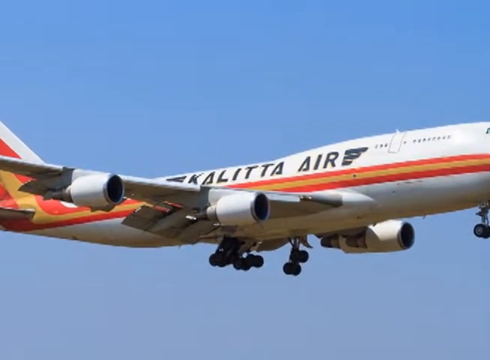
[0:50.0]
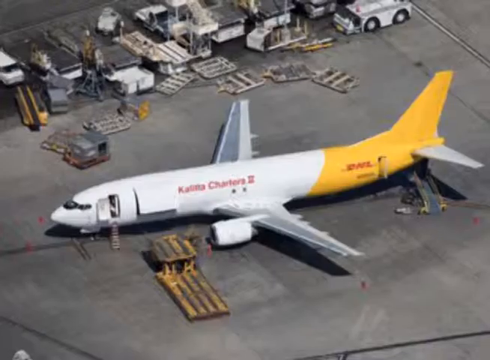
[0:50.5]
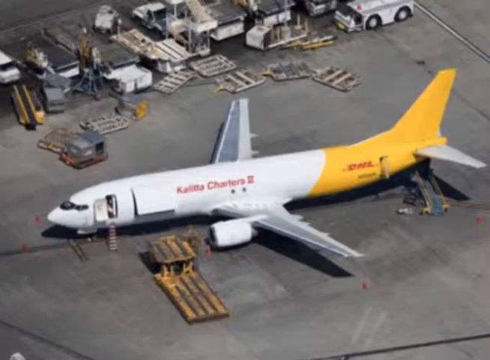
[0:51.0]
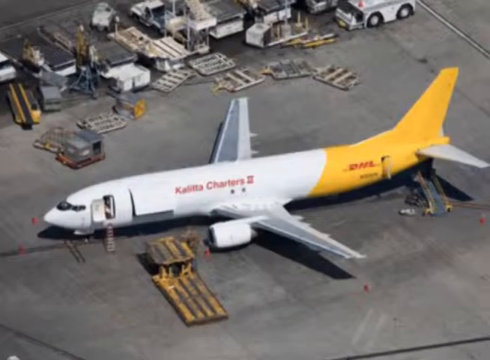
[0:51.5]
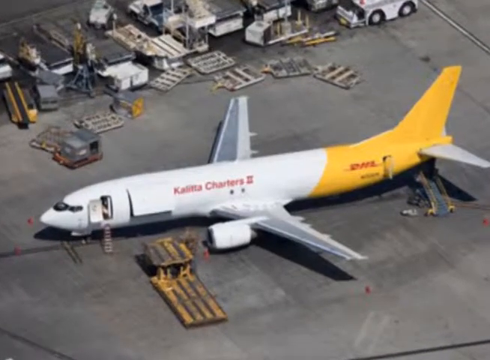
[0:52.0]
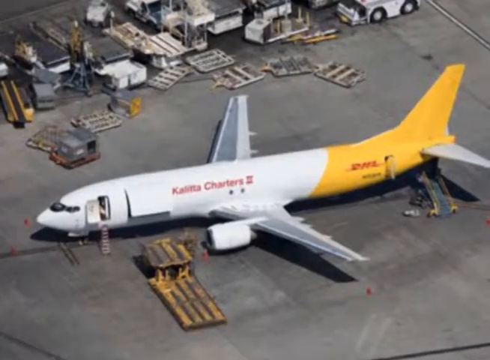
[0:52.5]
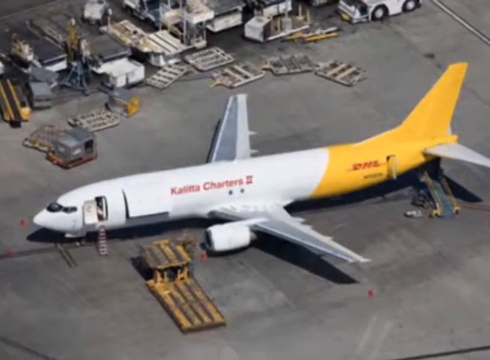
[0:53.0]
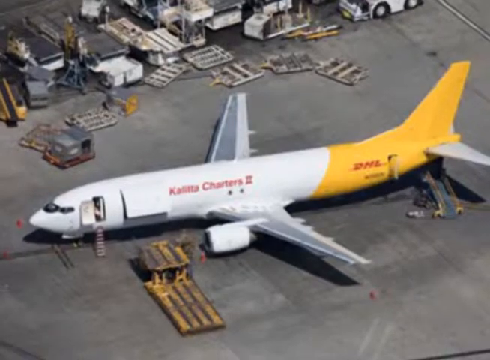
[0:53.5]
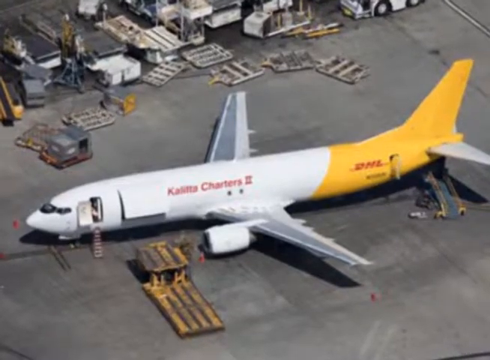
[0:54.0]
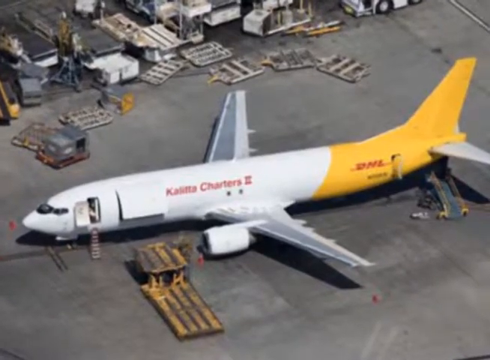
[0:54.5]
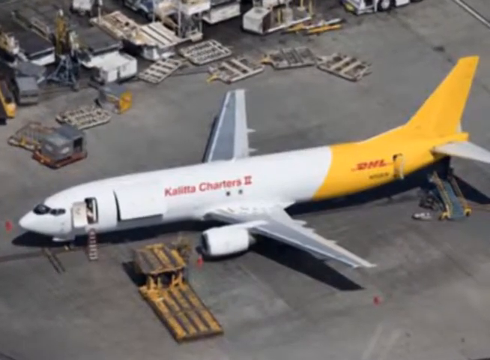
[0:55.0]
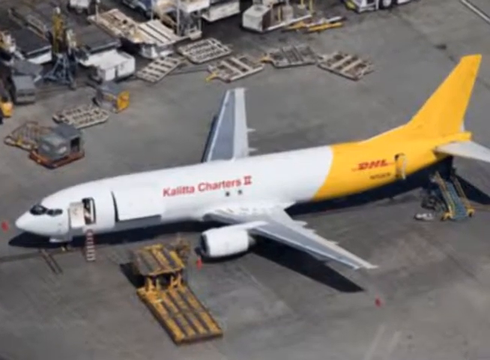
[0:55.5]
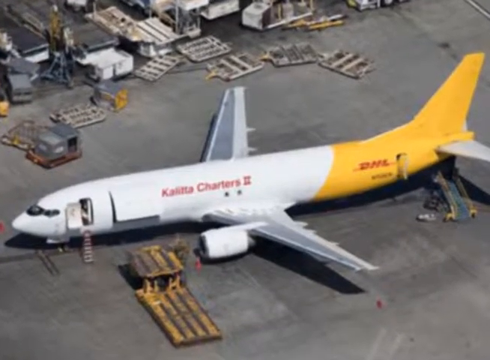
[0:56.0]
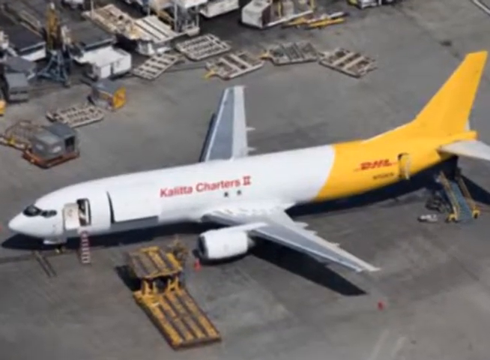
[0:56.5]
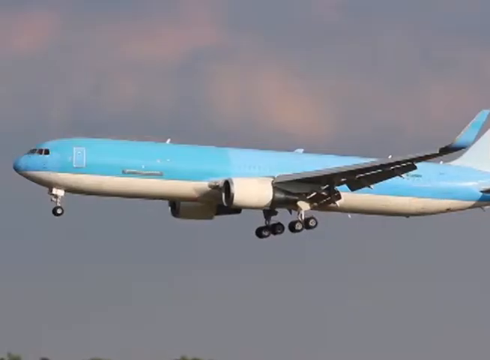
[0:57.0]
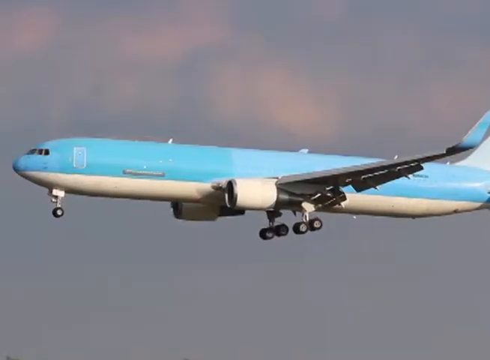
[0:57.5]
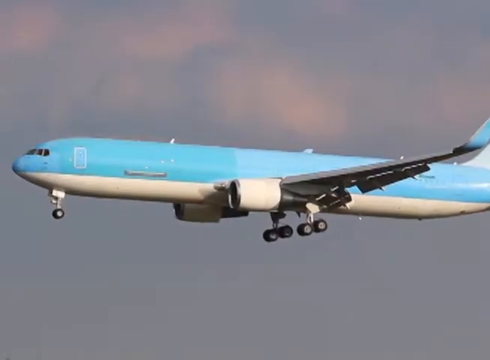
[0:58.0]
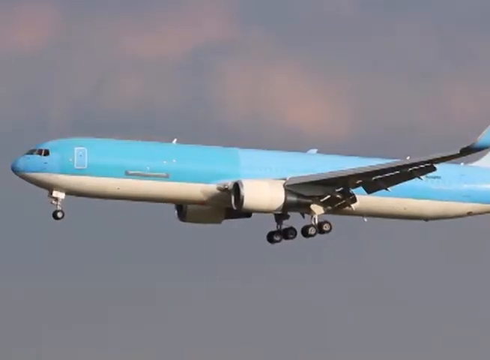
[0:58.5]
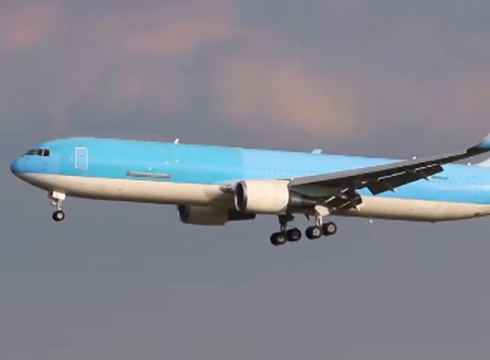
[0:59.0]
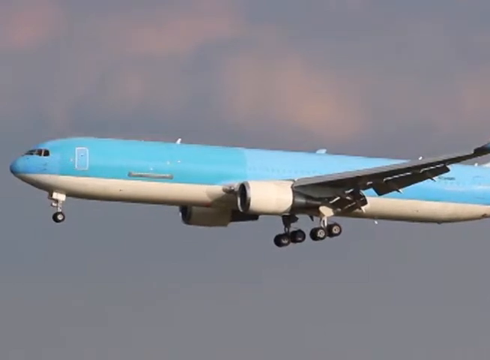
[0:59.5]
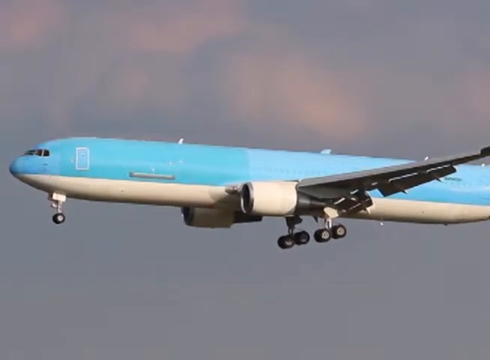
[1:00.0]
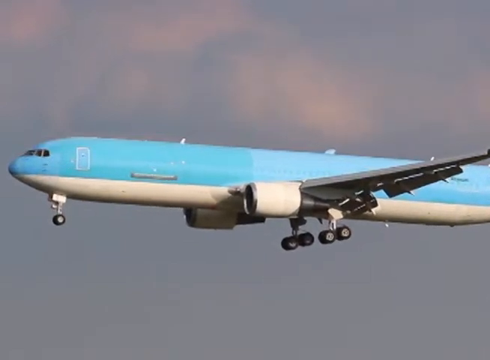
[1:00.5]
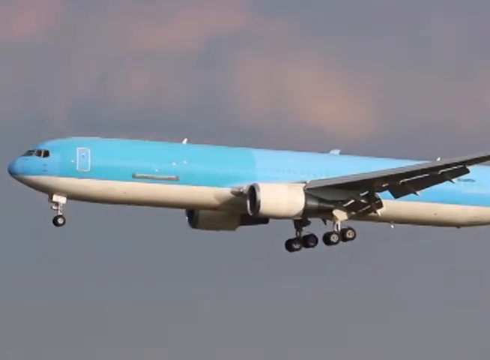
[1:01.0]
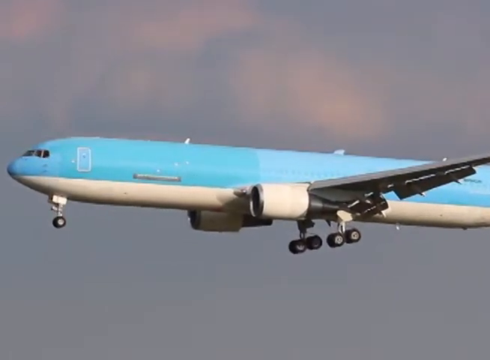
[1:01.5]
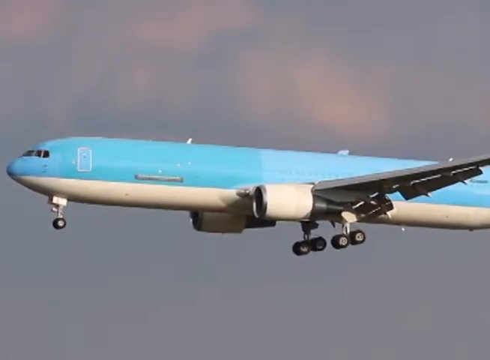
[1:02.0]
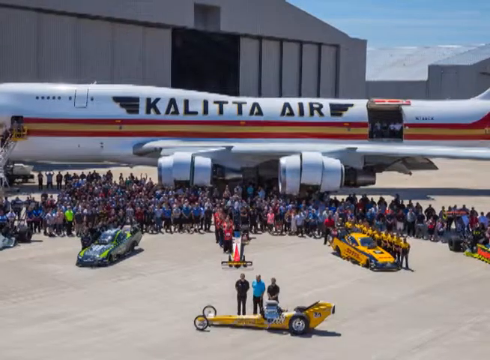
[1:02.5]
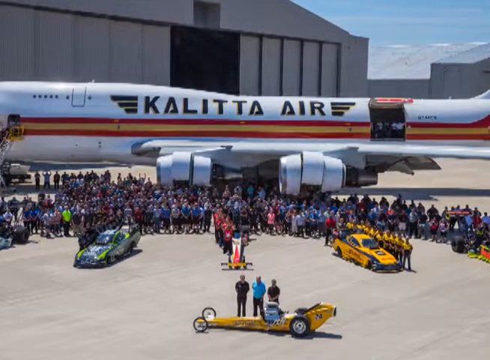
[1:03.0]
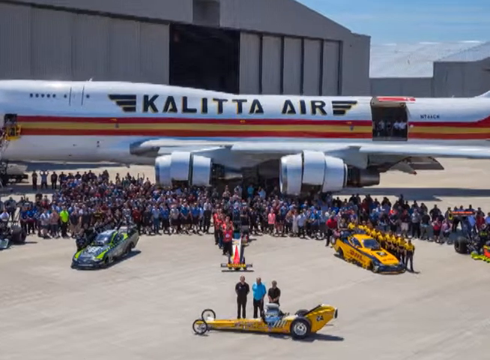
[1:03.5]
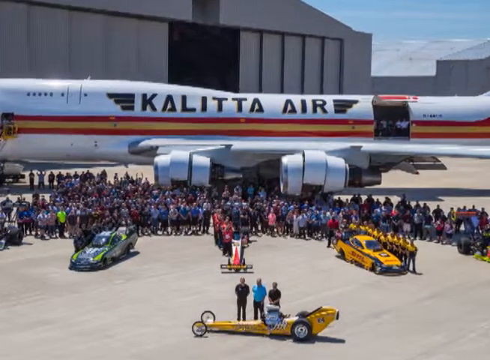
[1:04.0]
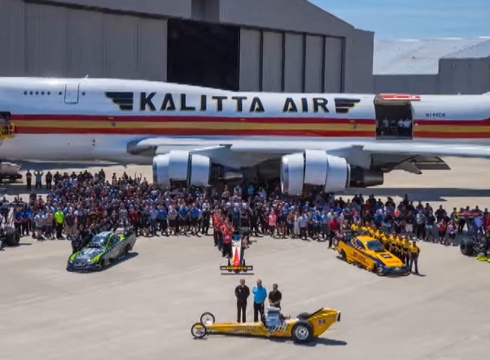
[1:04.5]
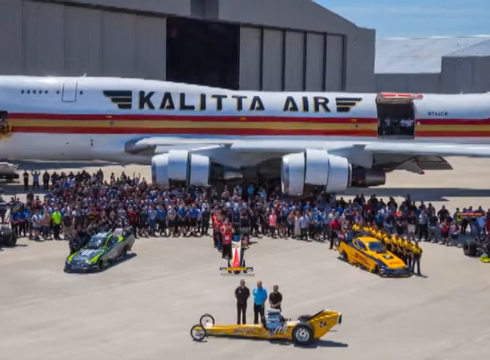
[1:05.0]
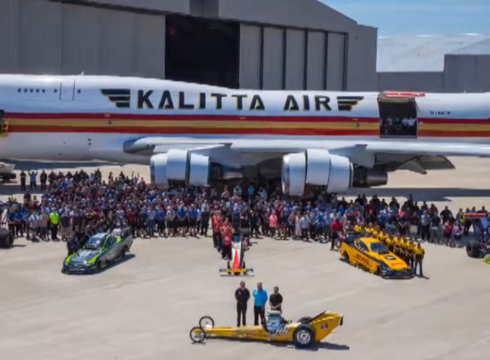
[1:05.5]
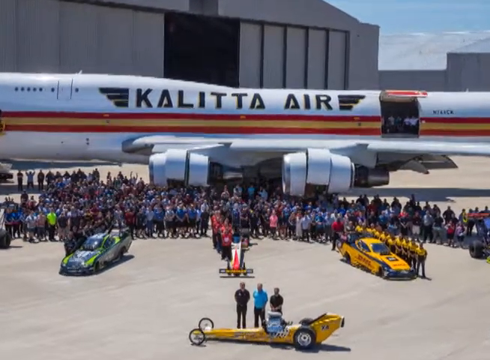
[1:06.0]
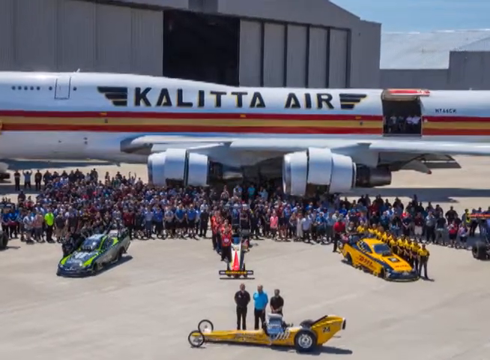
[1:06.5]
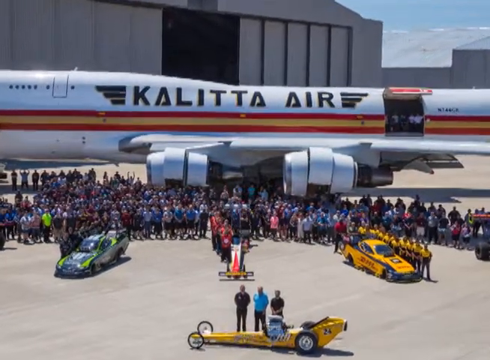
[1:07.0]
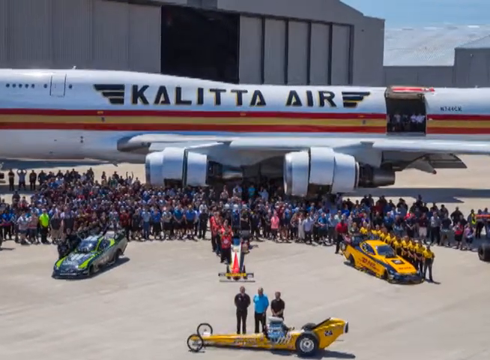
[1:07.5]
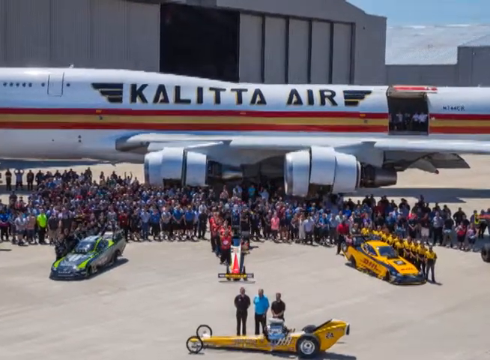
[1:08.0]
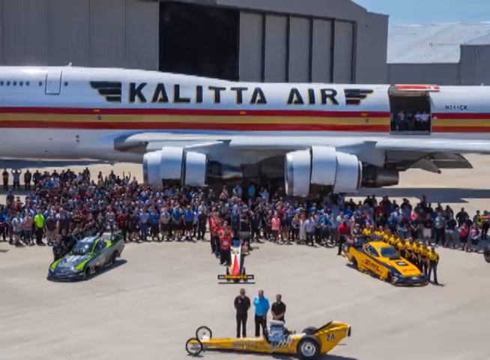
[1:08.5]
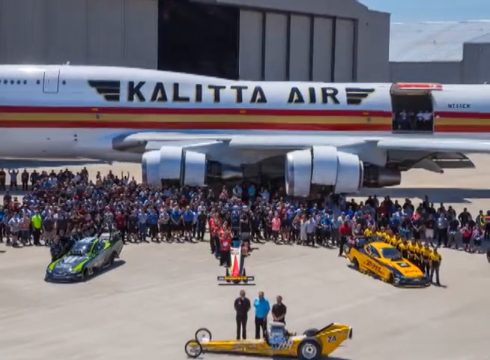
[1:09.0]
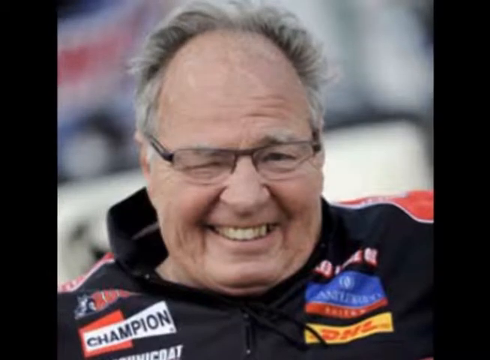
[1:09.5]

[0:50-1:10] An aerial view shows a tarmac that looks like it is at an airport, with what looks like machinery around. There is a plane with a yellow tail section and a white front and middle, with red writing on the white part reading "Kalitta Charters" followed by a Roman numeral two. The plane's door is open with steps leading up to it, and there also appears to be a ramp leading from, possibly out of, the tail section. The video transitions to a hazy day with a jumbo jet in flight; its fuselage is baby blue, its underside is white, and its landing gear is down as if it is about to land. The video then transitions to a tarmac again, where lots of people, who appear to be workers, stand in a semicircle. There are funny cars and two dragsters. A jumbo jet is positioned sideways, and the people stand underneath and around its wing in a semicircle. Its name, "Kalitta Air", is in black letters; the plane is white with two red stripes and an orange stripe between them. It is a sunny day, and the hangar is visible.